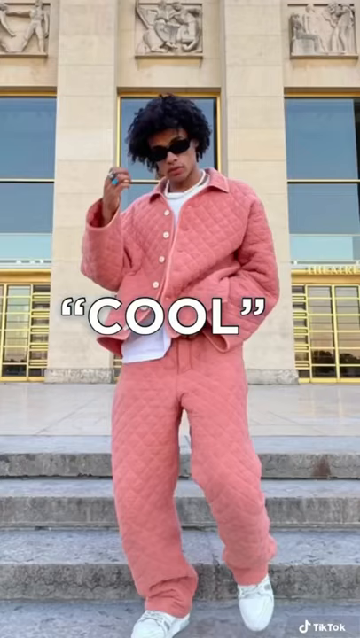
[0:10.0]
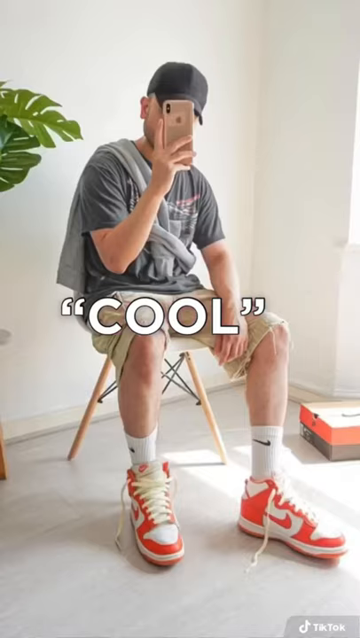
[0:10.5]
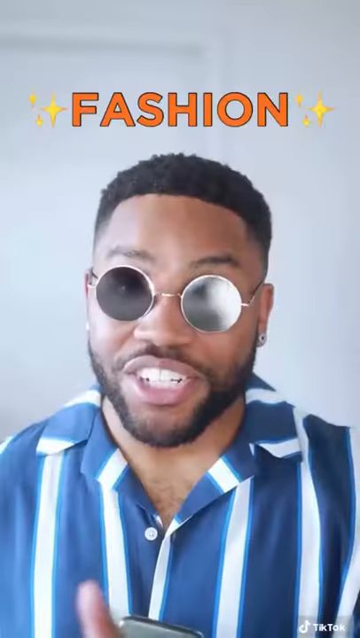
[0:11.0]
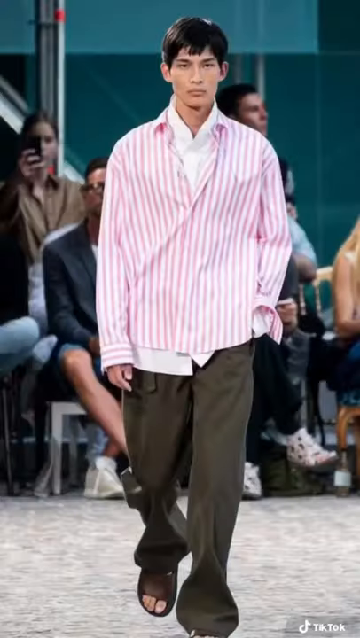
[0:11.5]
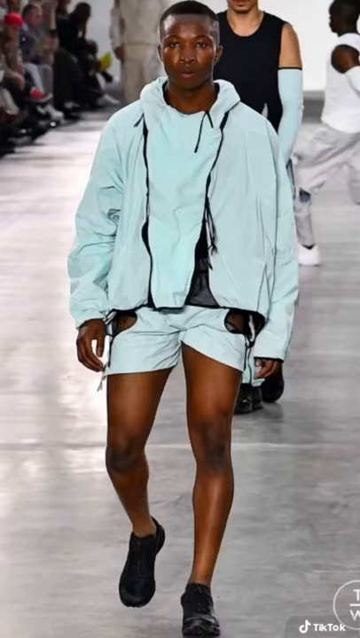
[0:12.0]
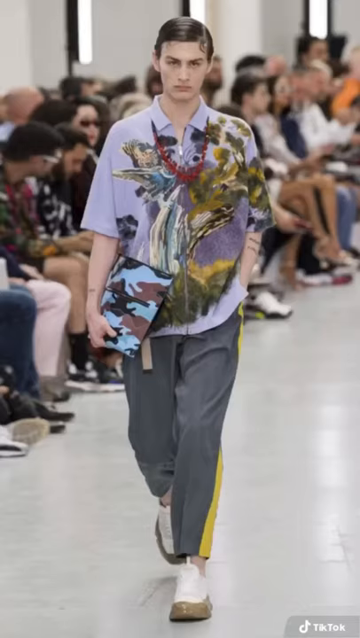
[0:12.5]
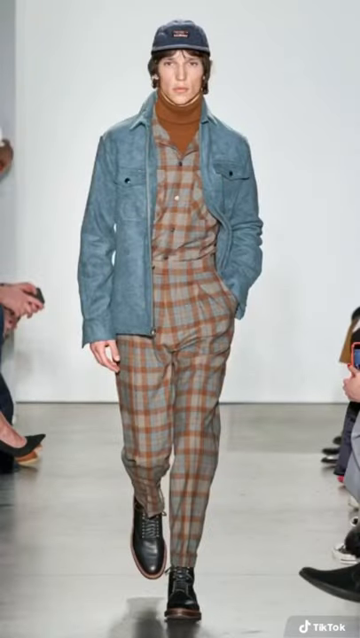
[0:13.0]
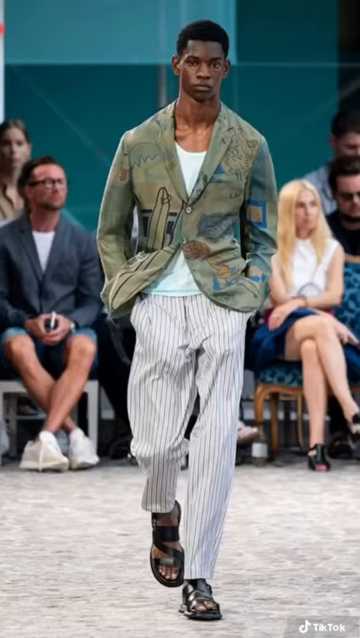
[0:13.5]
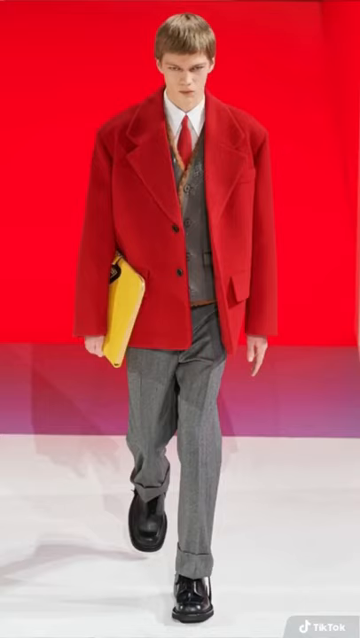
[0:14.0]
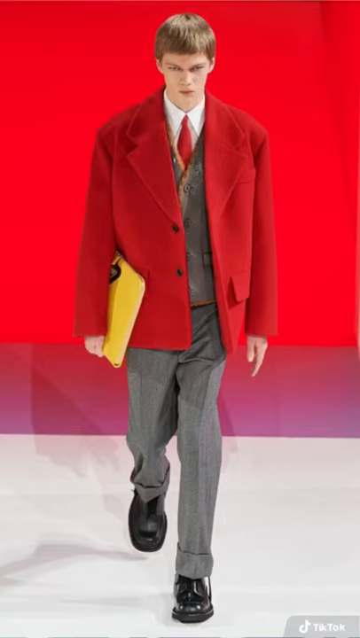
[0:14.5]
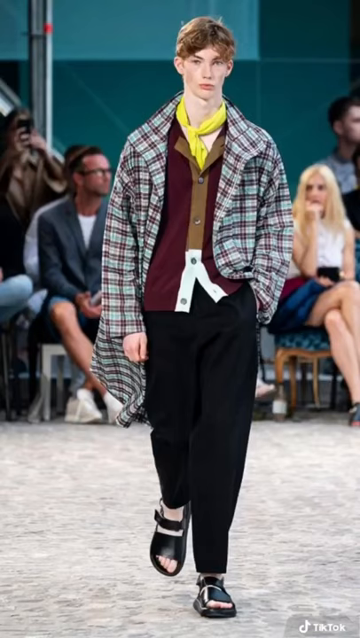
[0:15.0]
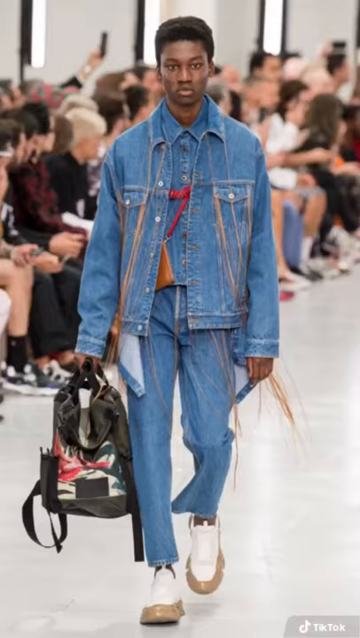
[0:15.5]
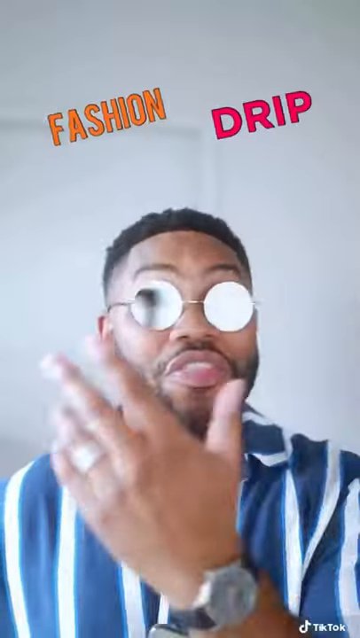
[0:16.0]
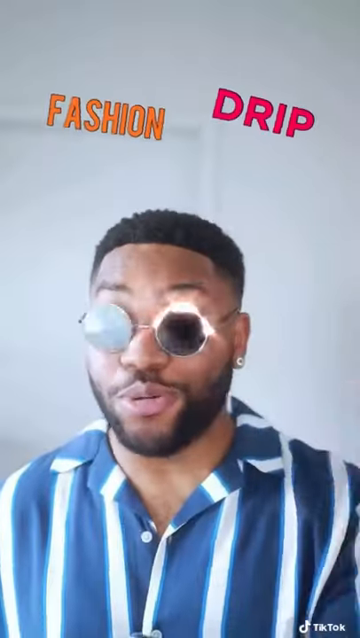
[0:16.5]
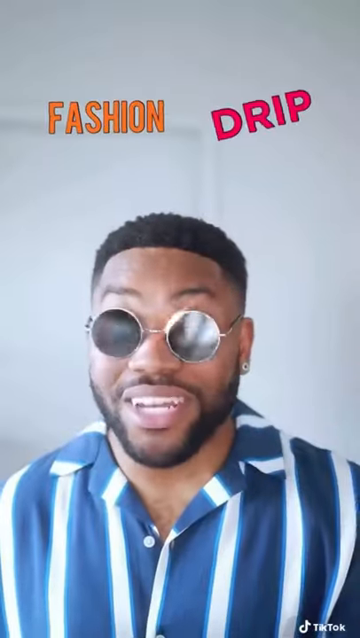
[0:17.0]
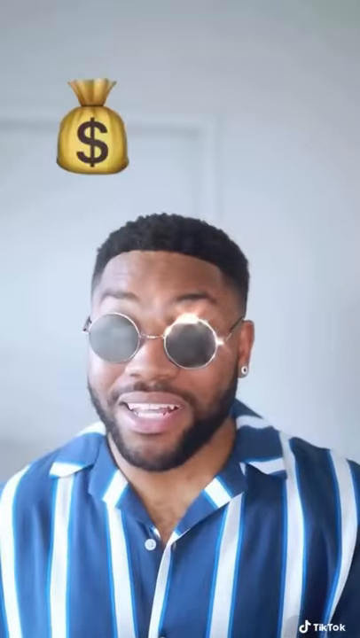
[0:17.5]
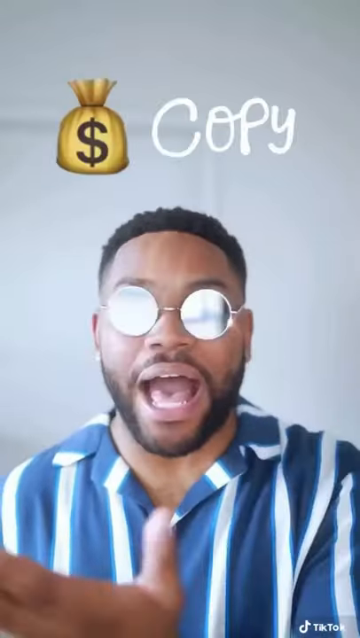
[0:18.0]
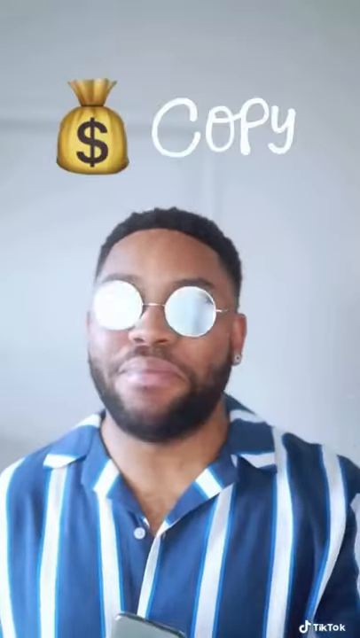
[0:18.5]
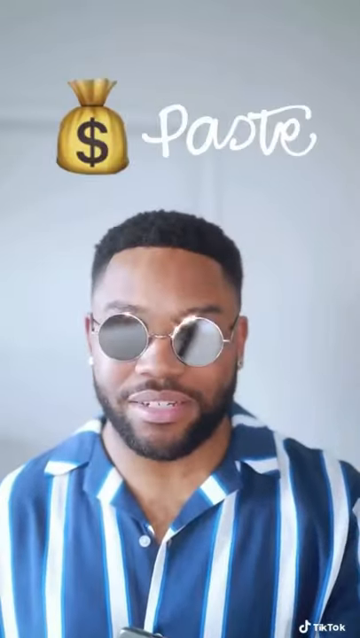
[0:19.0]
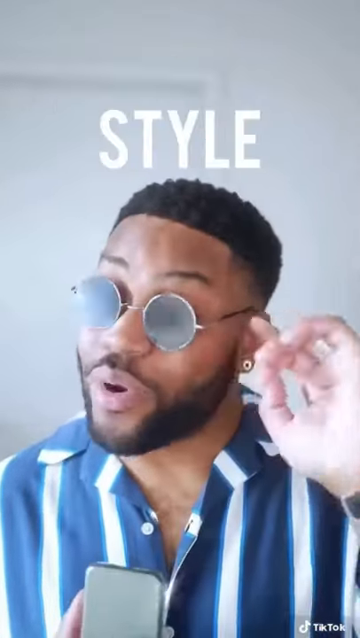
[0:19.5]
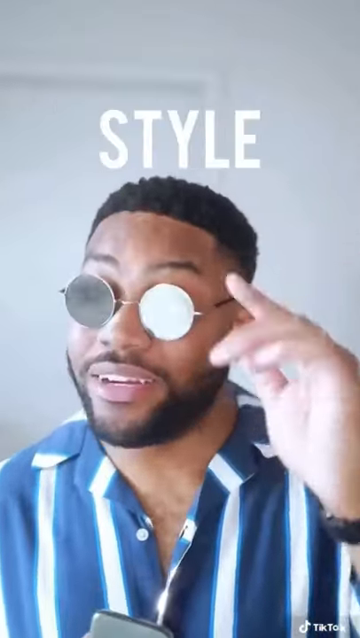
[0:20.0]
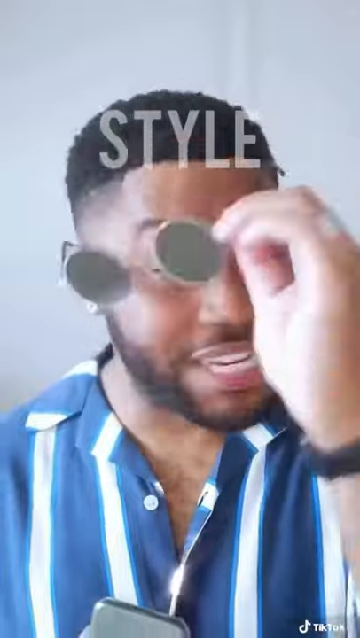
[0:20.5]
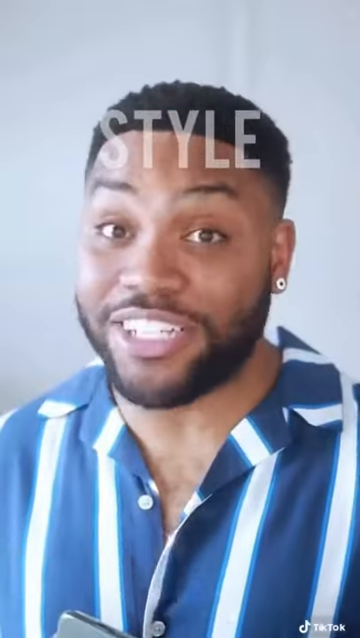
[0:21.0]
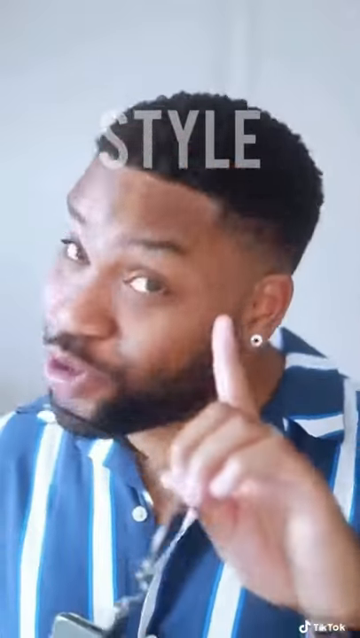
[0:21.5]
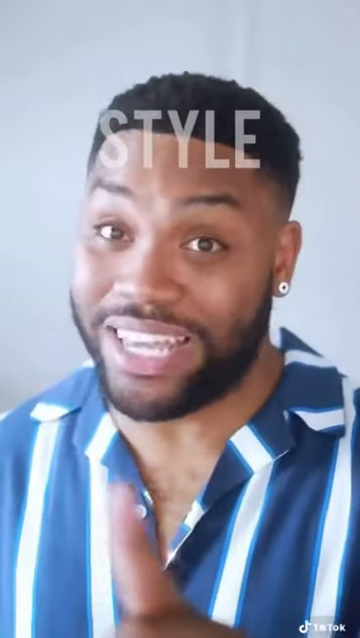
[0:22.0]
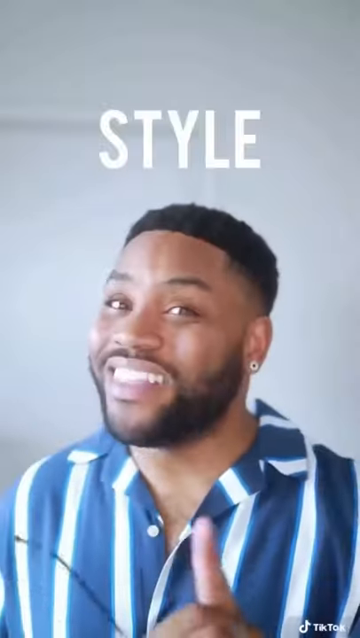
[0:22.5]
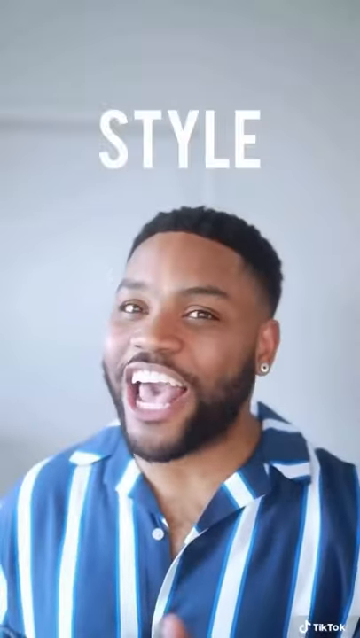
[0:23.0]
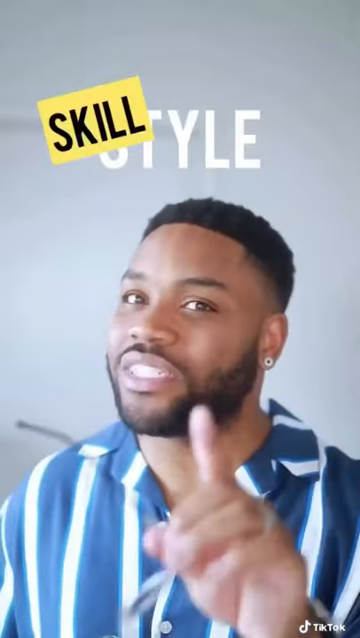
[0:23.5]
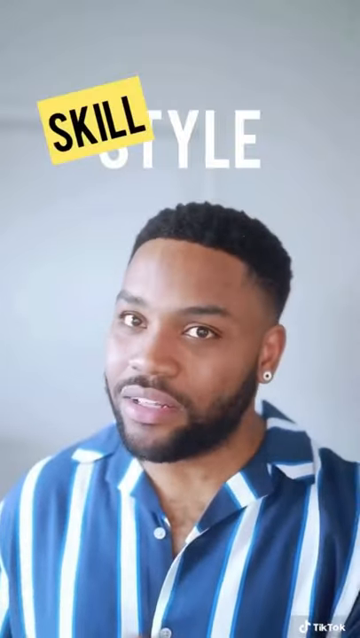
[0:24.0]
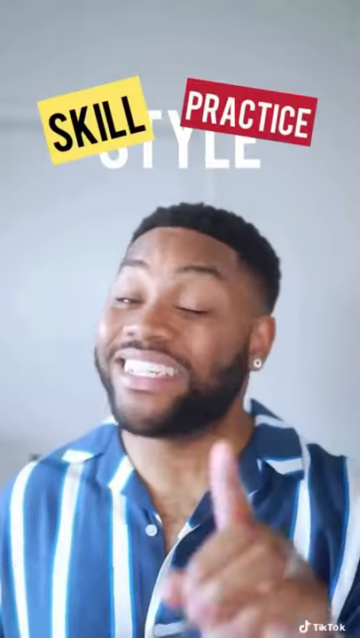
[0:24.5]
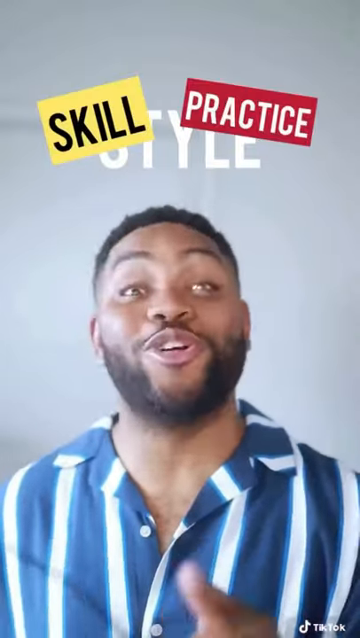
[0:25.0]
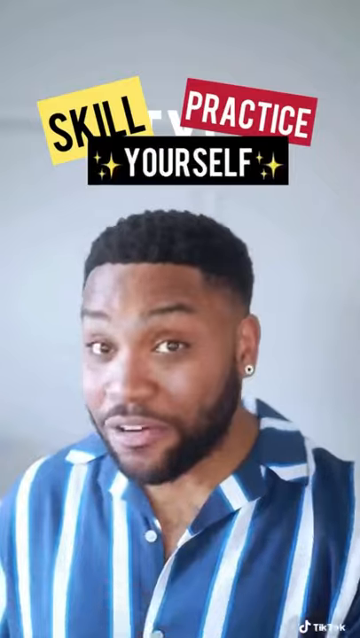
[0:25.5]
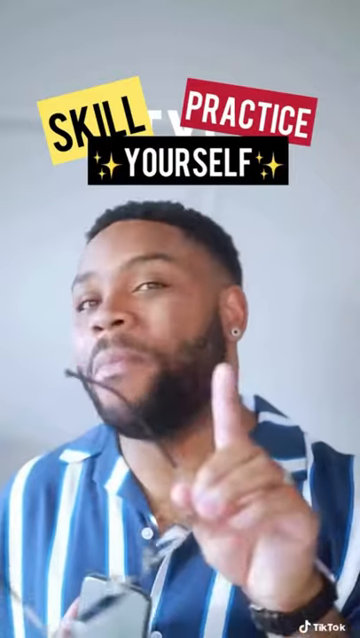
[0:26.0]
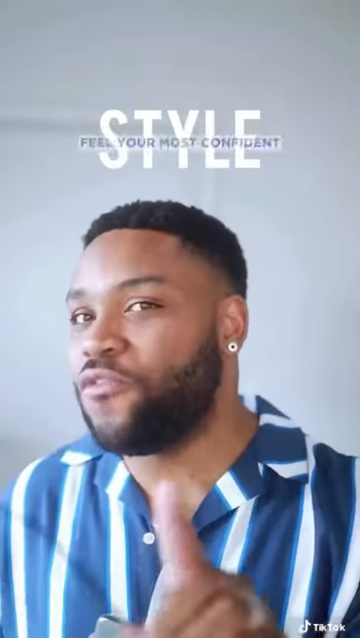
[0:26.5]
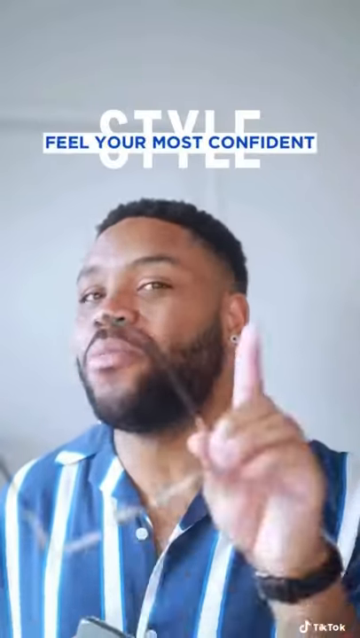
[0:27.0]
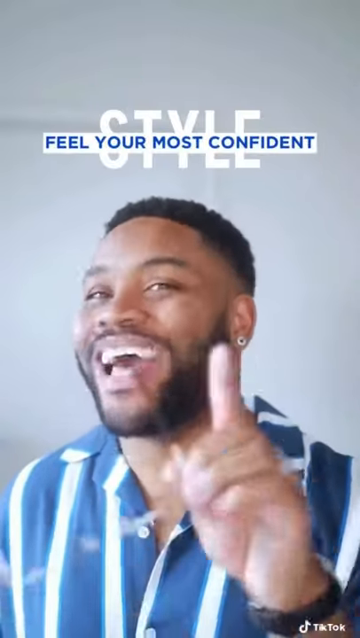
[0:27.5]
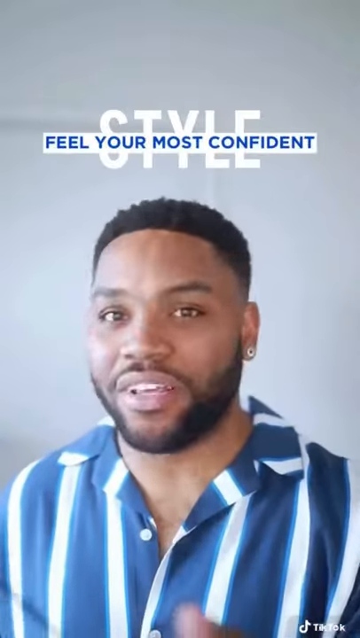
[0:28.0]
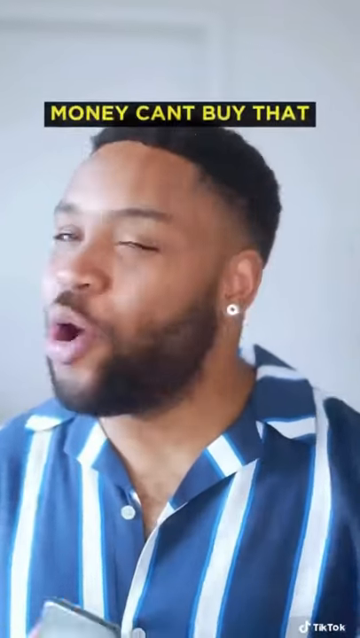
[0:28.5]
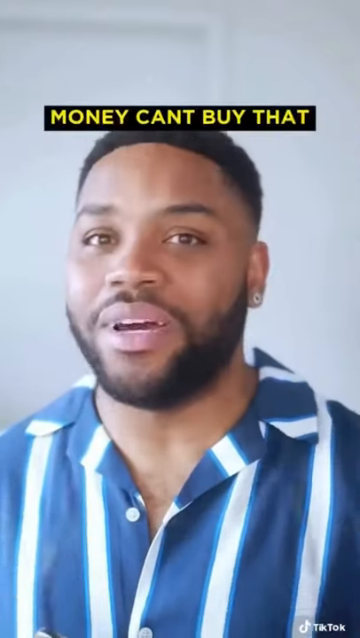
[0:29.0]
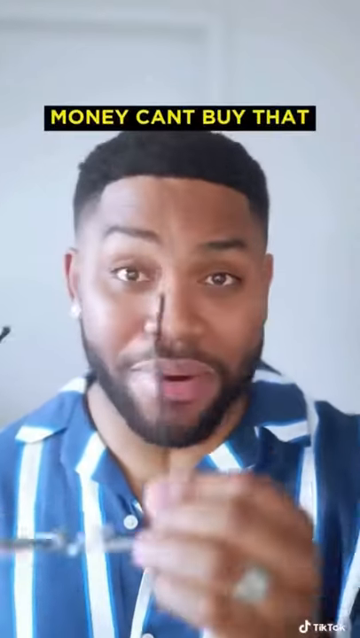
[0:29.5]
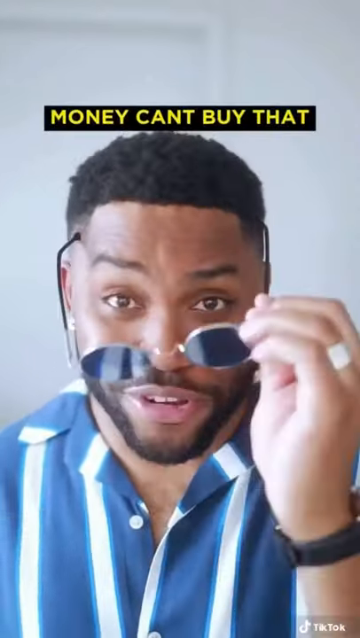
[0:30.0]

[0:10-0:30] Various pictures of young men in different clothes continue to appear behind the word "cool", which is in quotes. A young man with an afro wears black sunglasses, a peach two-piece, white sneakers and a white t-shirt underneath. Next, a man sitting on a chair wears a black t-shirt with a grey jersey tied onto his chest, khaki shorts, white Nike socks and red and white Nike sneakers. The man in the striped blue and white shirt then comes onto the screen and talks to it, with the word "fashion" in orange on top of him. Pictures of male models follow, showing them walking on a runway with audiences seen on the side; the models are young men of different races. The man in the blue and white striped shirt appears again talking to the camera, with the words "fashion" in orange and "drip" in red bouncing on top of him. The word "copy" then appears in white, and beside it is a golden bag with a dollar sign in front of it. Next the word "style" appears on top of the man, and he seems to be talking about style. He removes his glasses and speaks directly to the camera, while the words "skill" and "practice" appear on top of the word "style", along with the word "yourself". After those words disappear, the words "feel your most confident" appear, followed by the words "money can't buy that" on the screen.